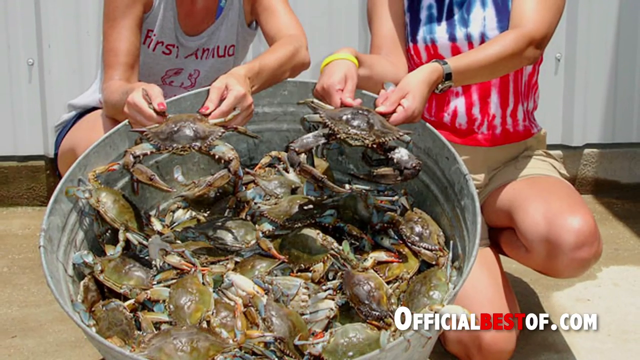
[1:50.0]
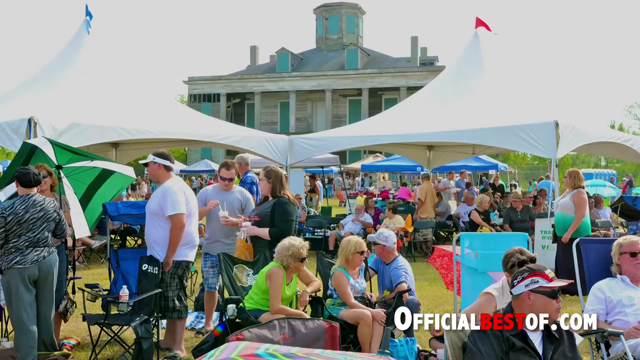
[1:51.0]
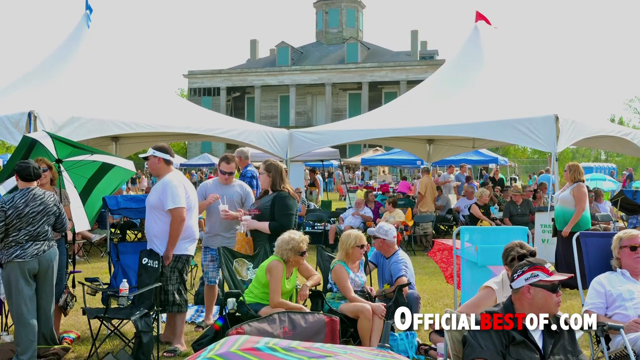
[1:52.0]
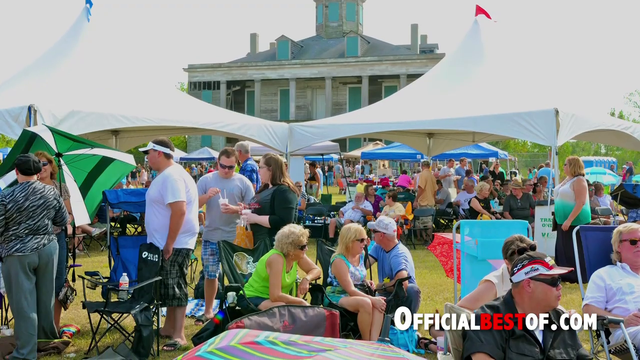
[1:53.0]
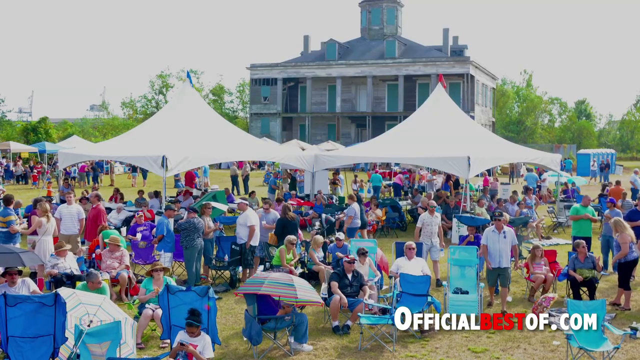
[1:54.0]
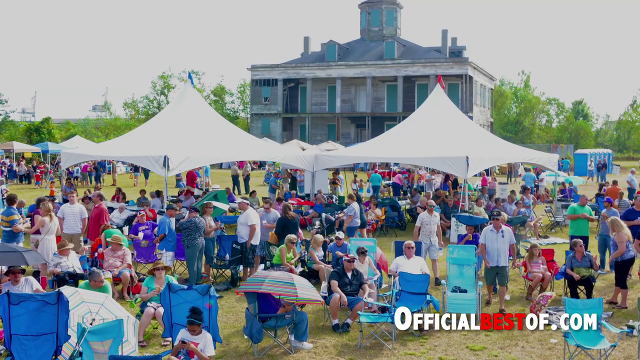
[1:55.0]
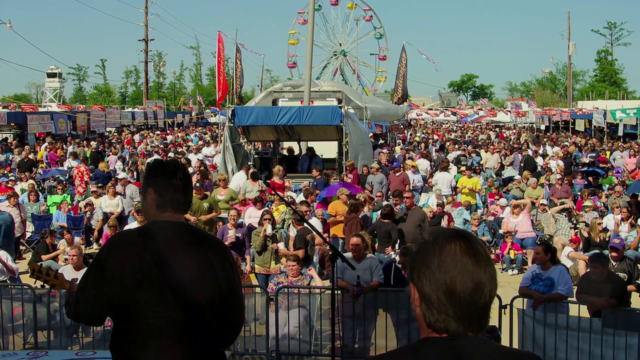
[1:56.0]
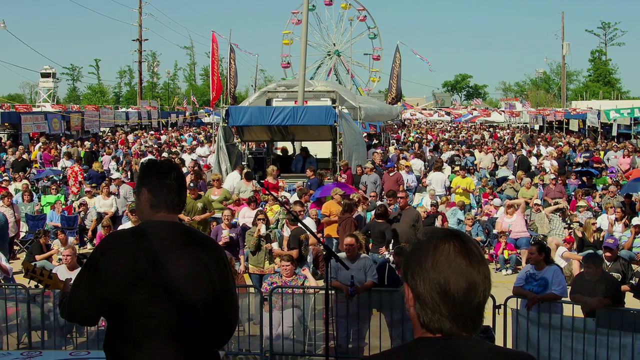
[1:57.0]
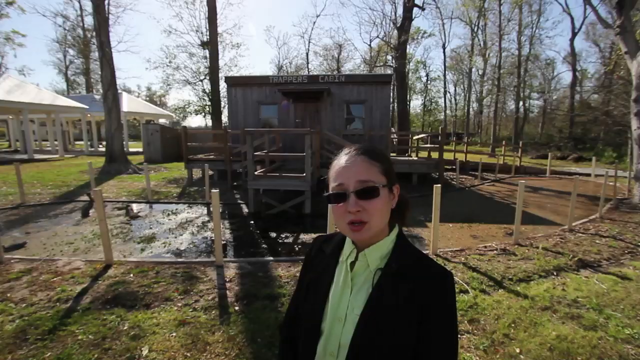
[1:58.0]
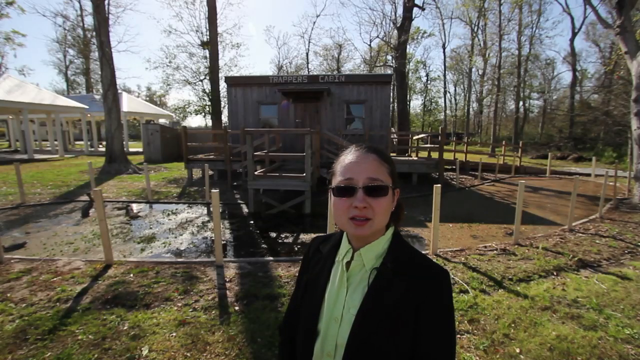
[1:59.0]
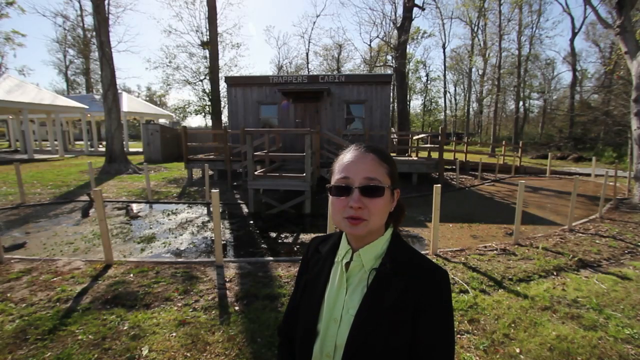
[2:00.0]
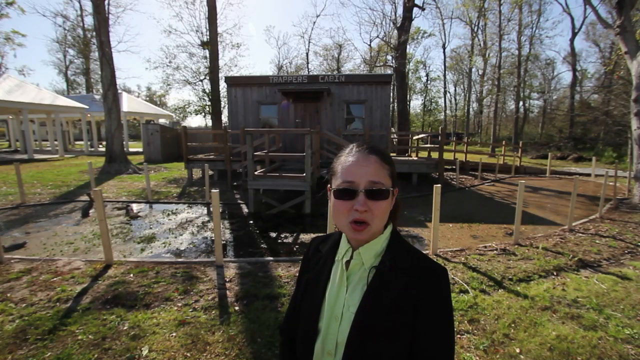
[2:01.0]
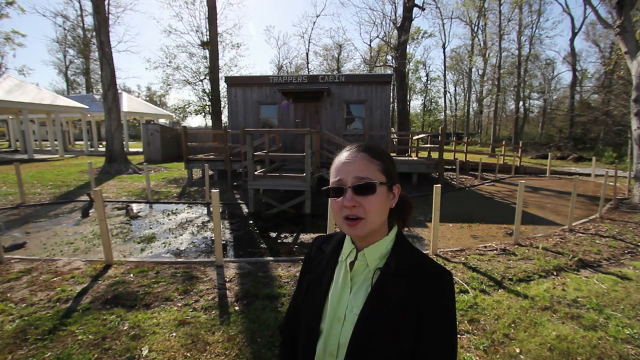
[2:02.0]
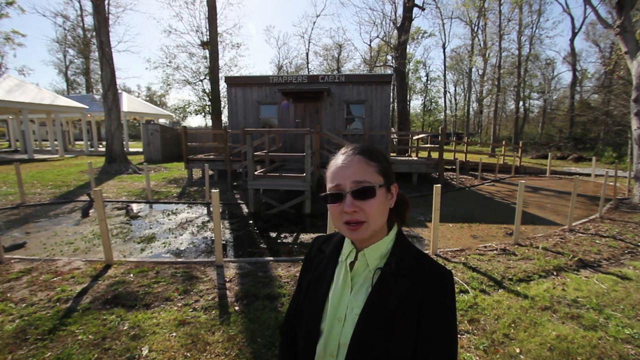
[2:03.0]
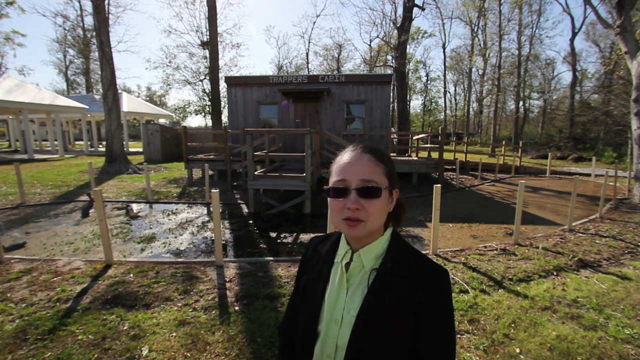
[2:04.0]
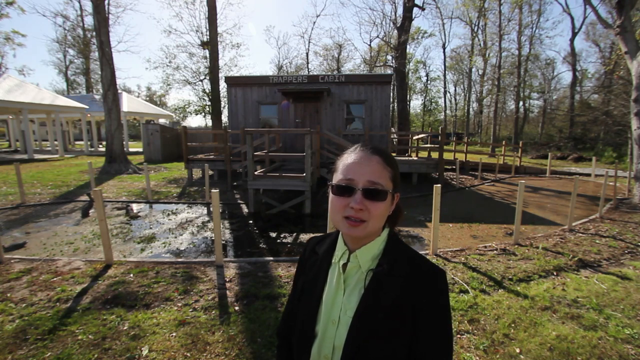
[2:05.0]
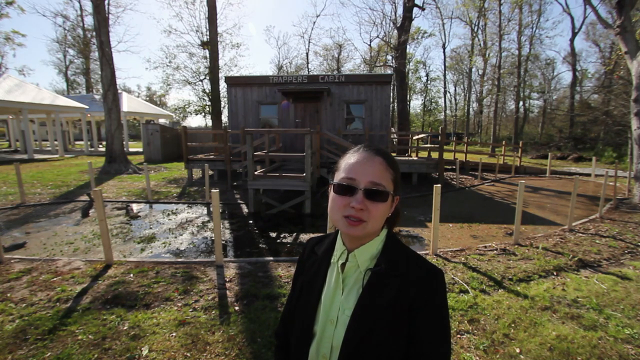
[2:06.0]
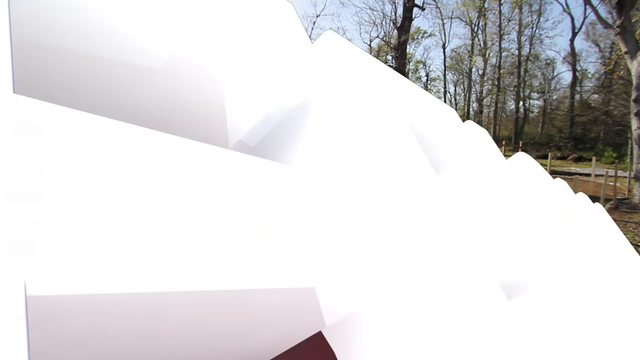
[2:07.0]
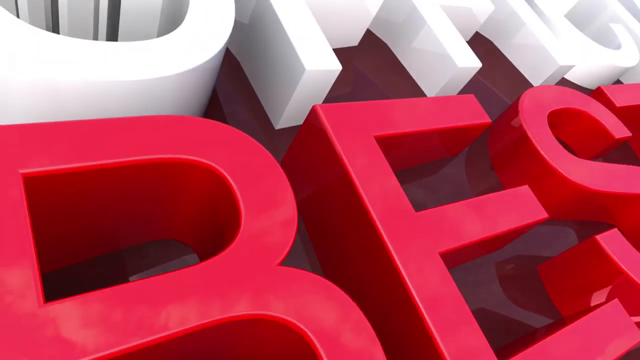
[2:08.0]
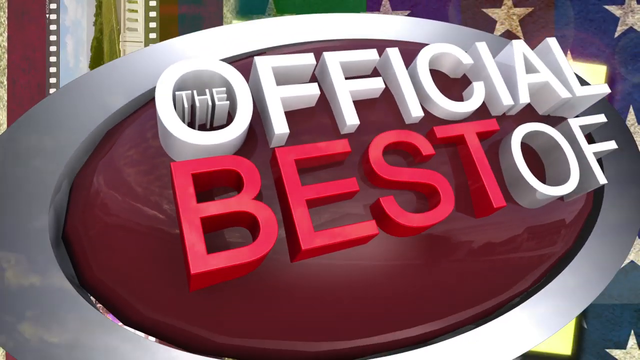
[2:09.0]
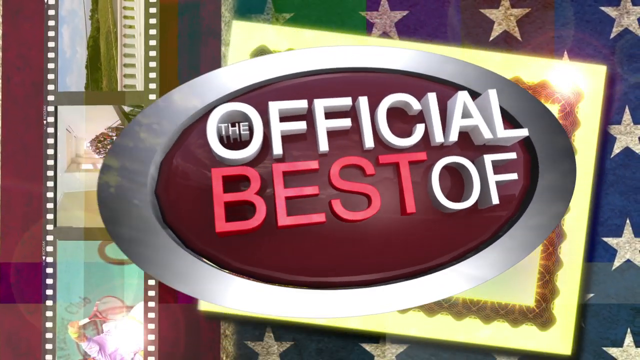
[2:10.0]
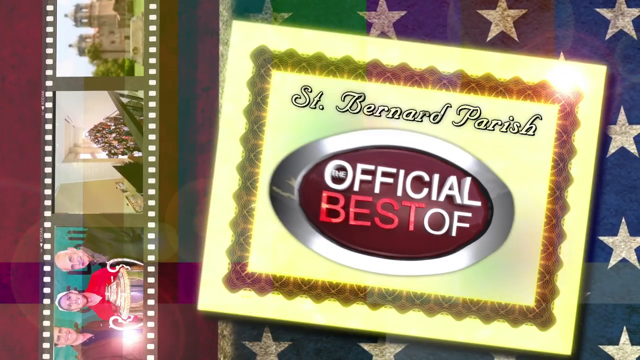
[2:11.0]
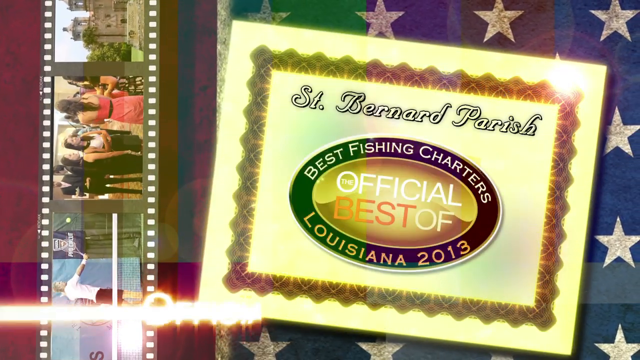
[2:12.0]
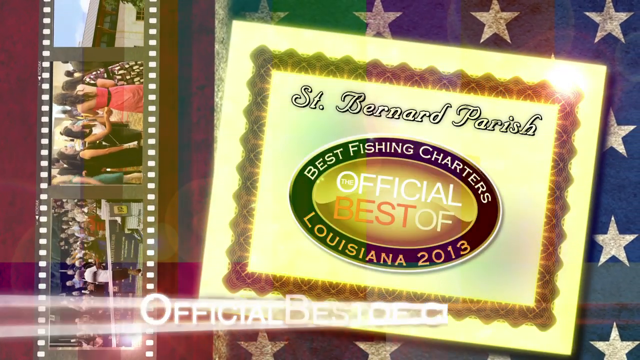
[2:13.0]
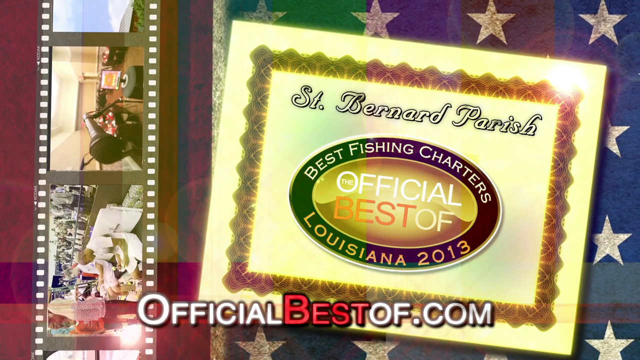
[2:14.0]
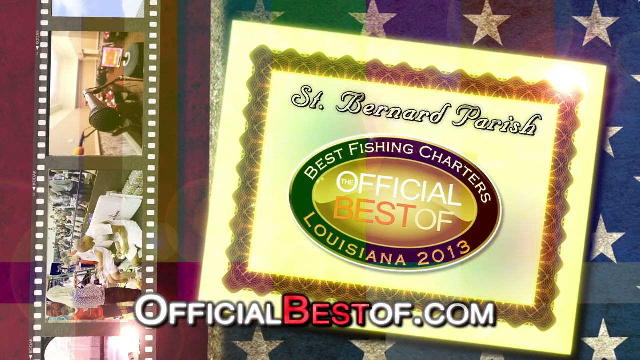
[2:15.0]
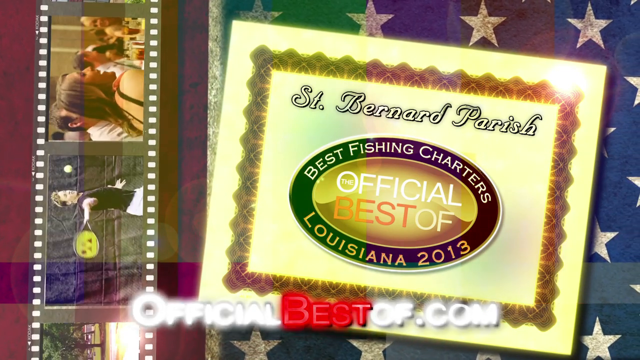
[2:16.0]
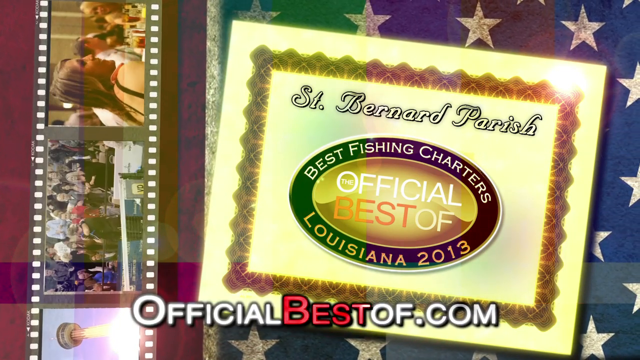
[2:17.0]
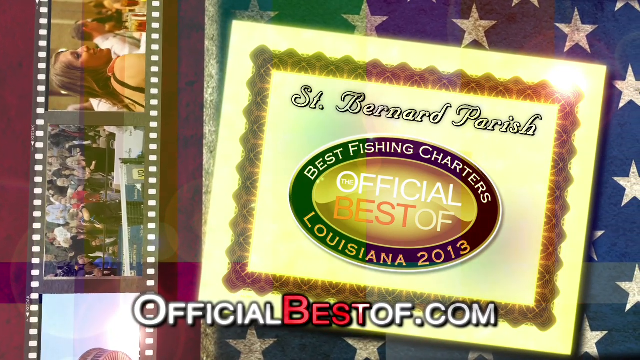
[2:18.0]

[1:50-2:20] A big barrel full of crabs stacked on top of each other appears, with two people apparently showing how much crab they got; they are holding two of the crabs. The crabs are mostly a brownish-yellowish color, but the one held by the man on the right is a dark brown, almost black color. A picture of a big festival with a lot of people follows, then another festival with a lot of people and a Ferris wheel in the background, possibly some sort of fishing festival. An end screen or credit sequence shows "St. Bernard Parish", "best fishing charters" and "best of Louisiana 2013", with a website at the bottom.